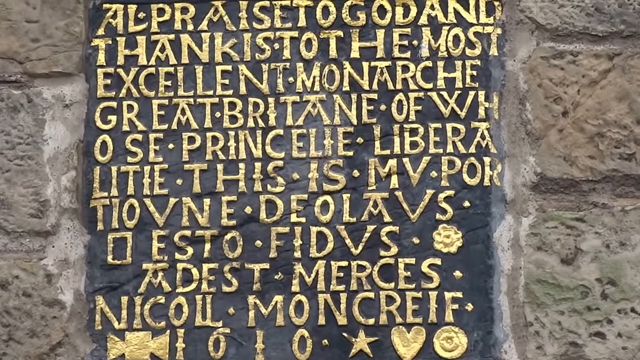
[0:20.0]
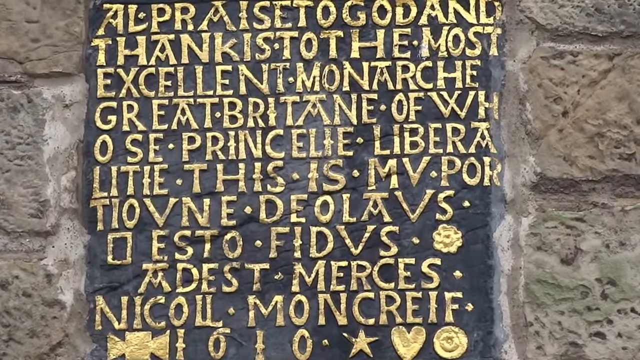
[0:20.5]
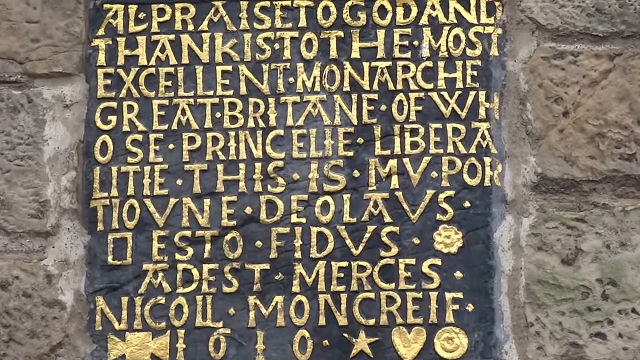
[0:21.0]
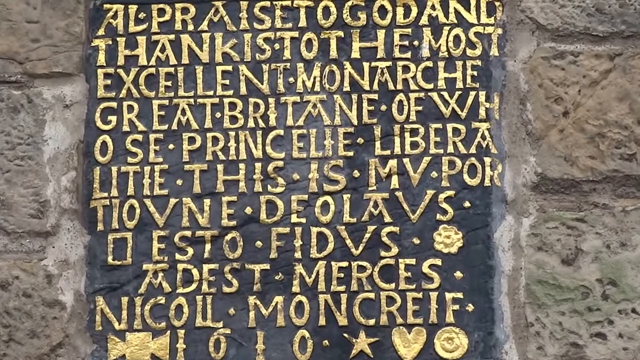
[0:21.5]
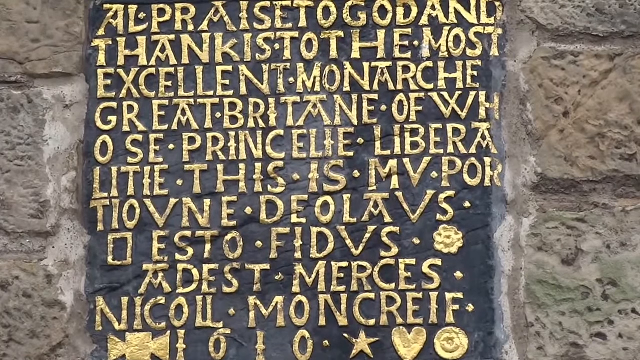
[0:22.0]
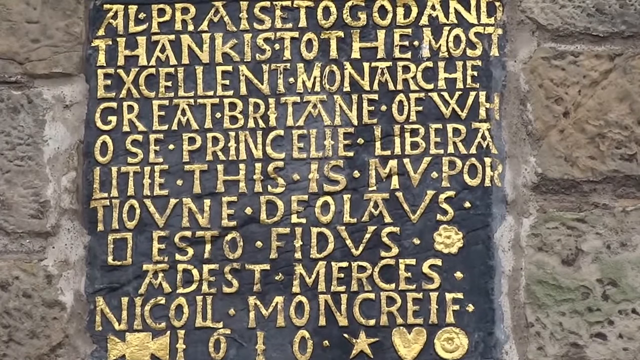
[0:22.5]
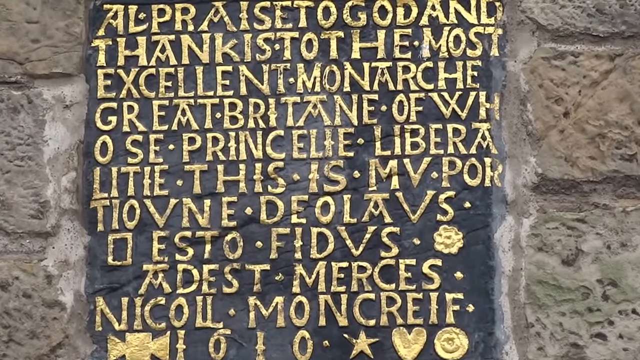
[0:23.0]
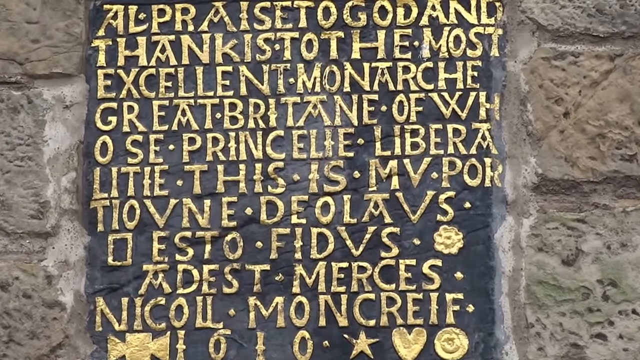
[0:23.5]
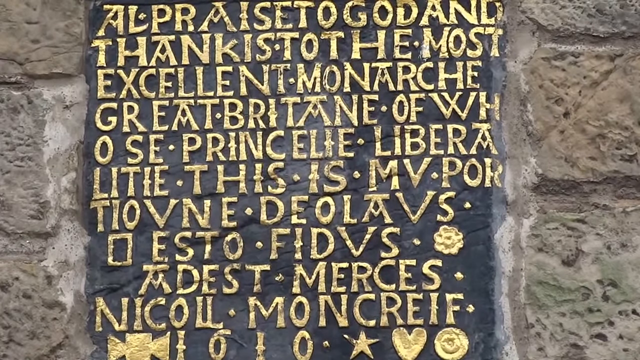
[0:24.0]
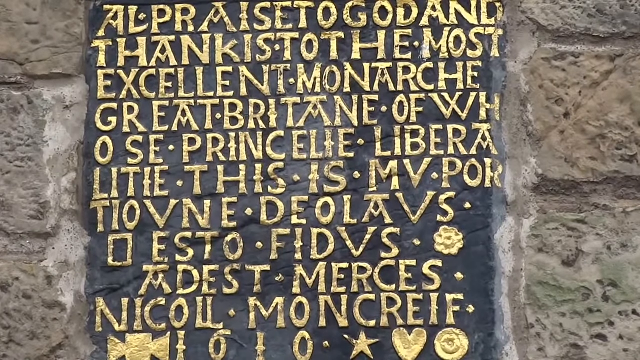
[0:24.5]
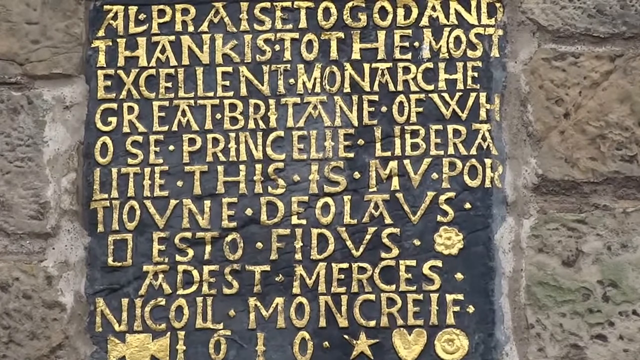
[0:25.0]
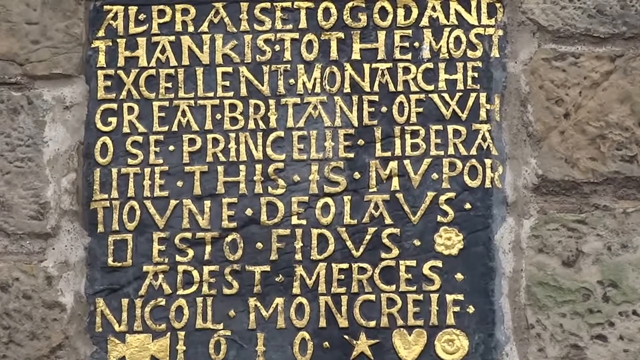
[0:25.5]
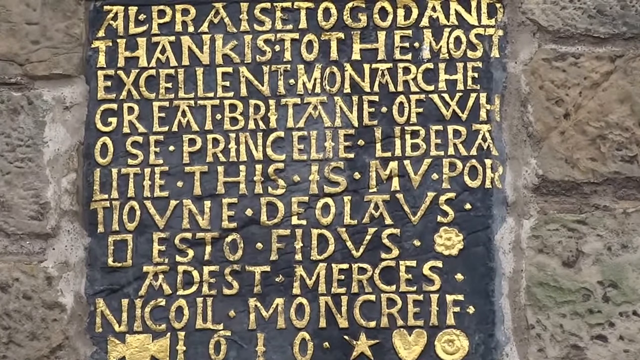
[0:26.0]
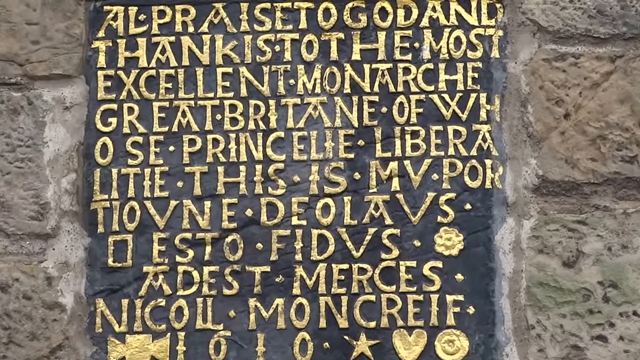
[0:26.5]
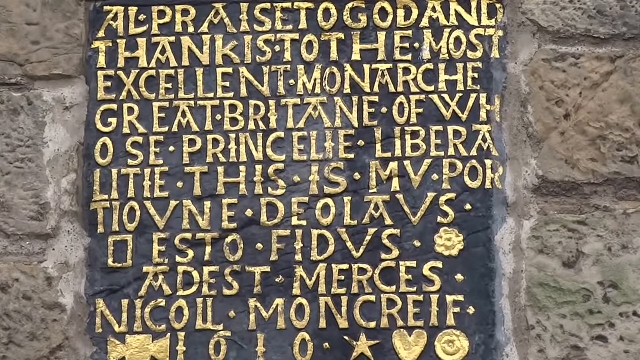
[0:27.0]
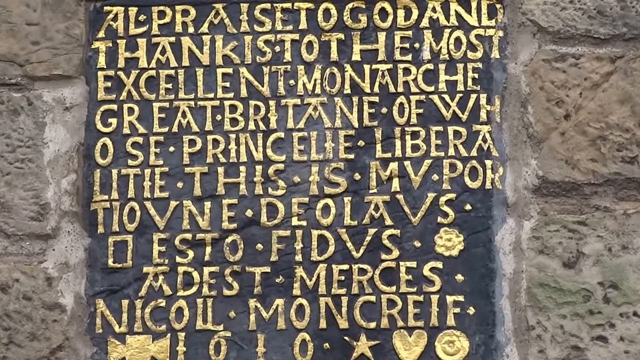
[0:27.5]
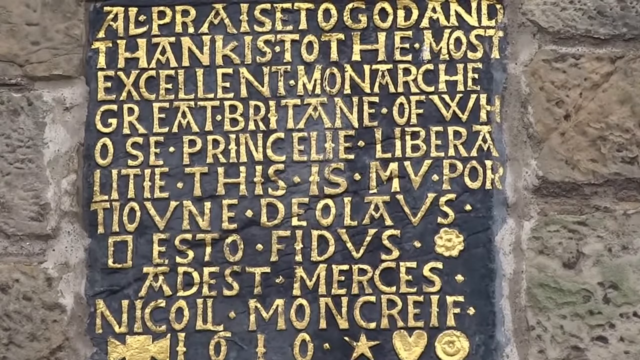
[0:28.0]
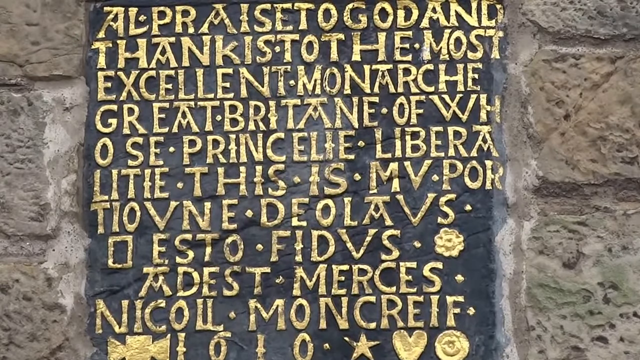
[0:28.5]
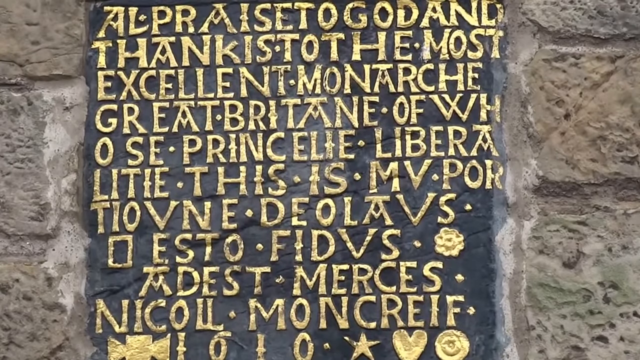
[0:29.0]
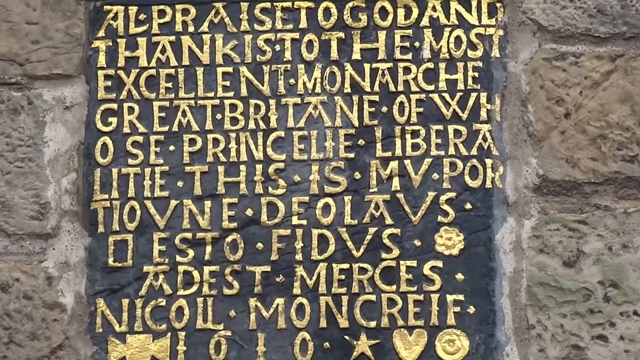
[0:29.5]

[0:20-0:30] The engraving on the brownish-gray stone wall remains in view, in gold-colored capital letters on a black background. It reads "All praise to God and thanks to the most excellent monarch great Britain of whose princelie", with each word separated by what looks like a full stop. The opening words are in English, while the rest is in a different language that could be Latin or Italian. The camera stays focused closely on the writing, and nothing else is visible.